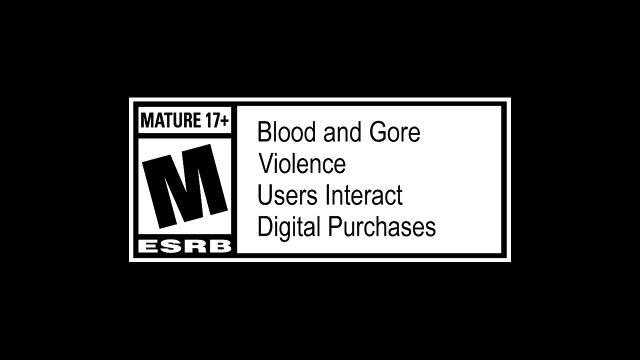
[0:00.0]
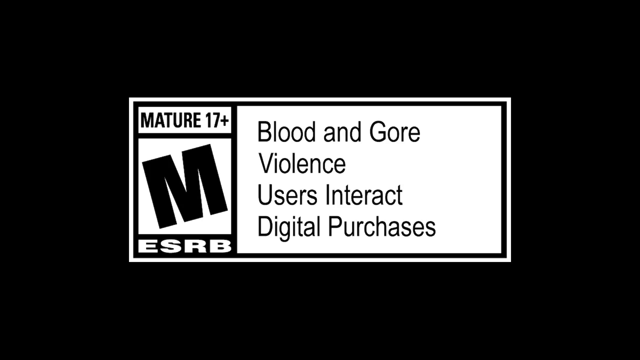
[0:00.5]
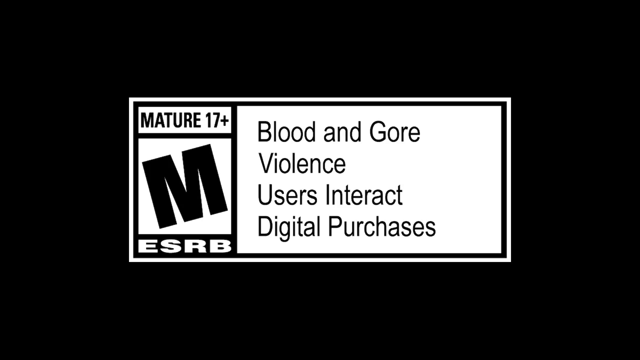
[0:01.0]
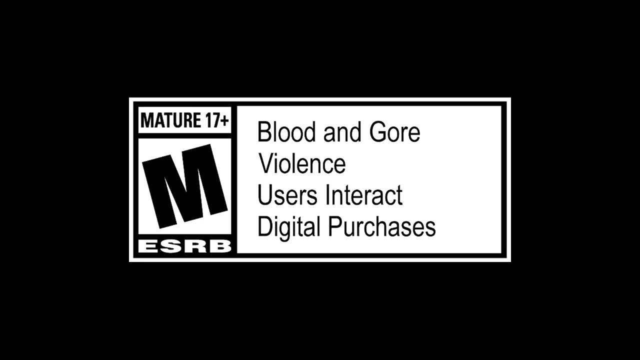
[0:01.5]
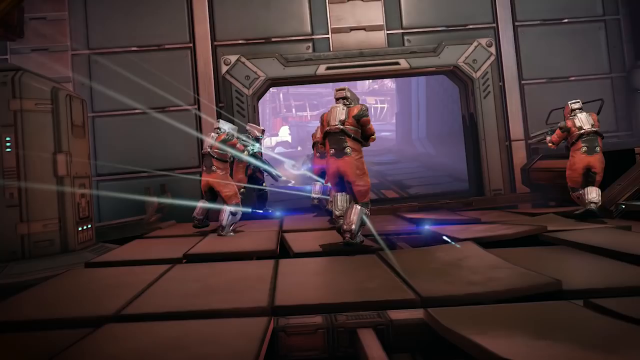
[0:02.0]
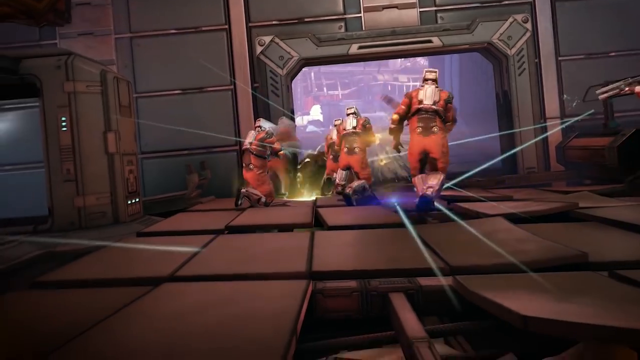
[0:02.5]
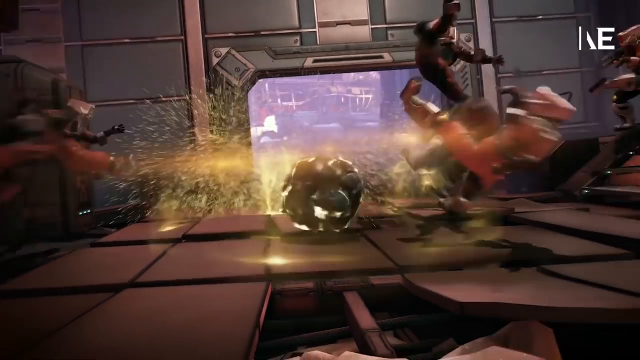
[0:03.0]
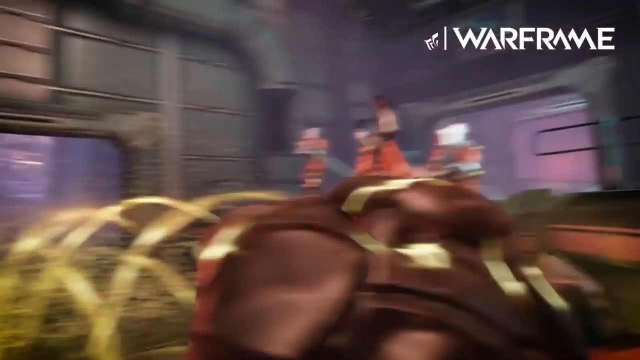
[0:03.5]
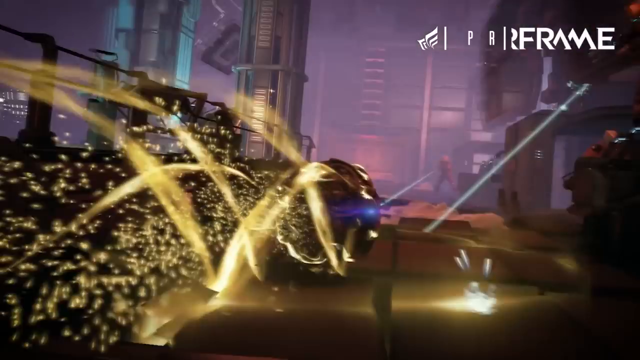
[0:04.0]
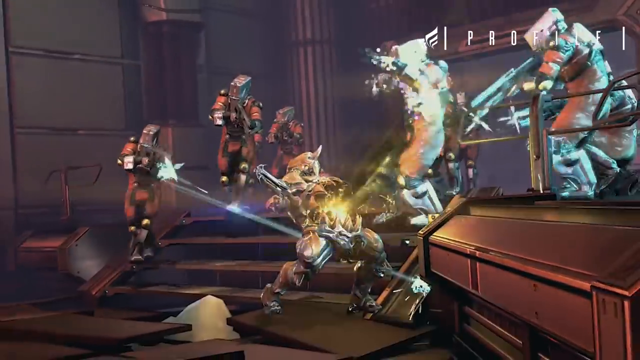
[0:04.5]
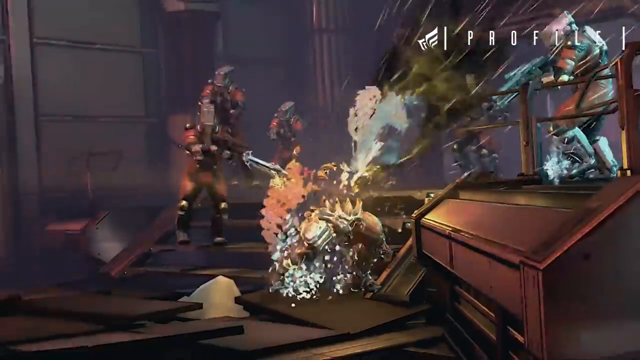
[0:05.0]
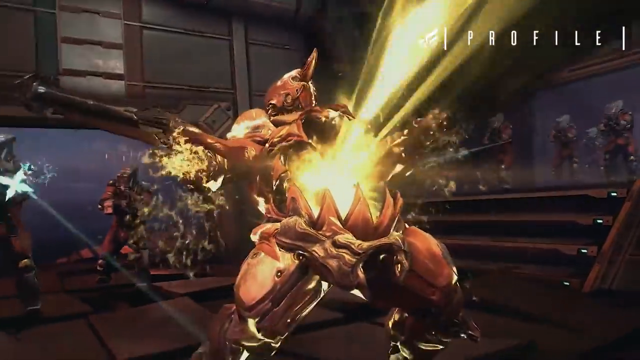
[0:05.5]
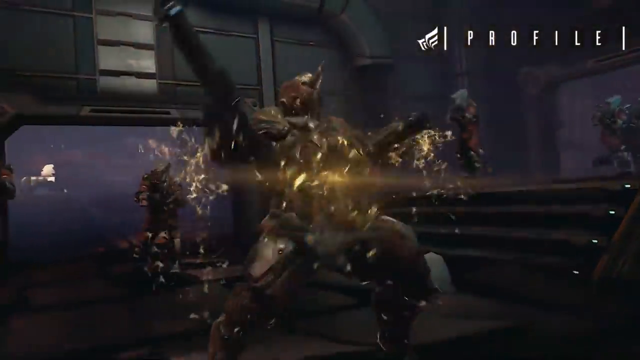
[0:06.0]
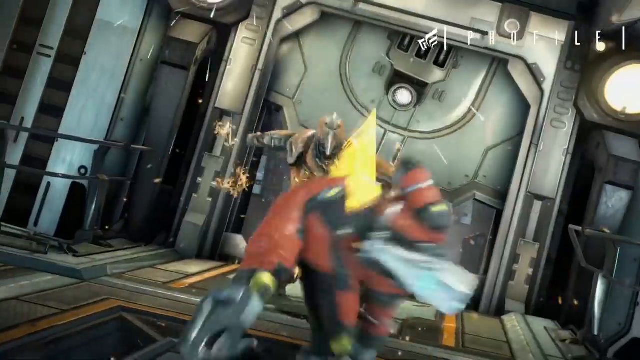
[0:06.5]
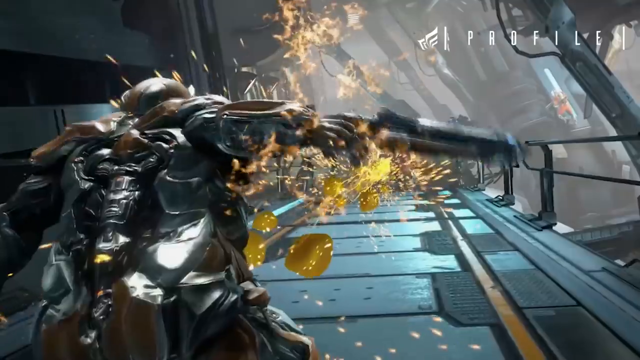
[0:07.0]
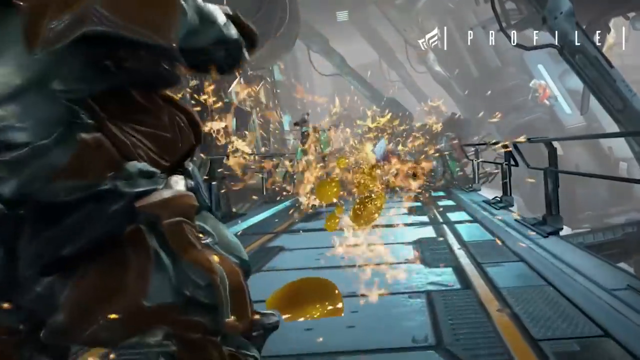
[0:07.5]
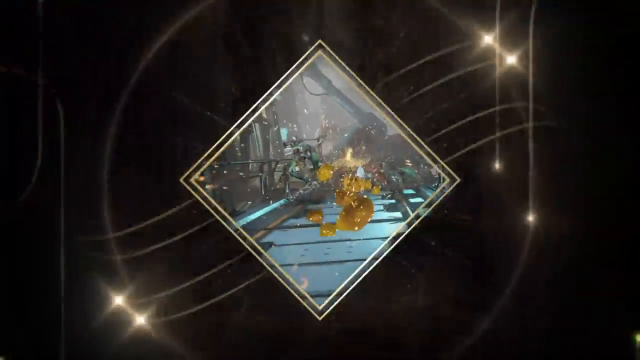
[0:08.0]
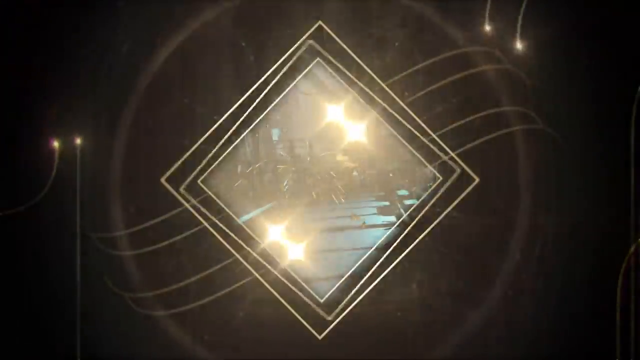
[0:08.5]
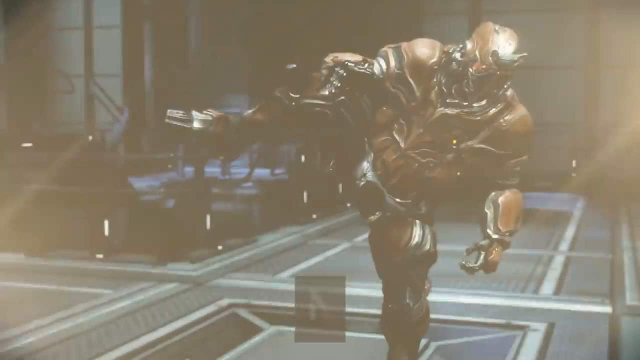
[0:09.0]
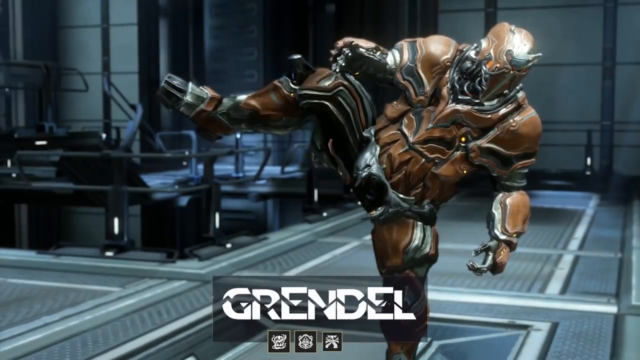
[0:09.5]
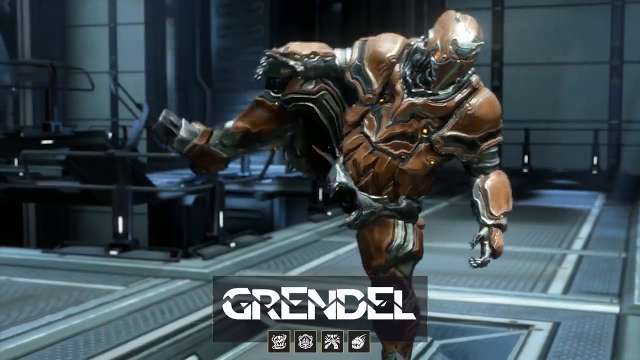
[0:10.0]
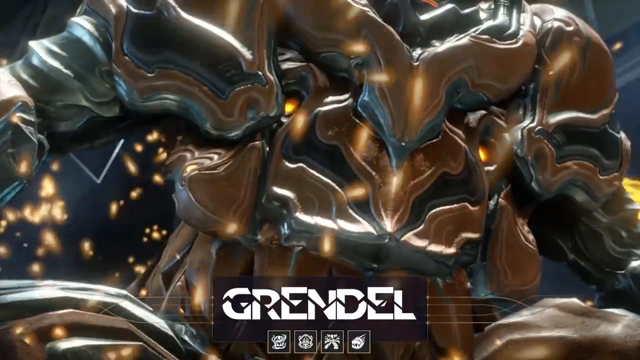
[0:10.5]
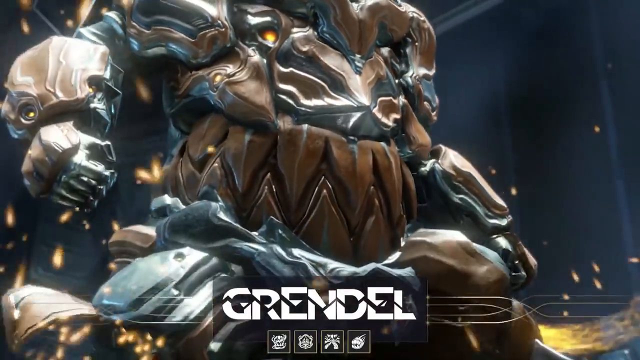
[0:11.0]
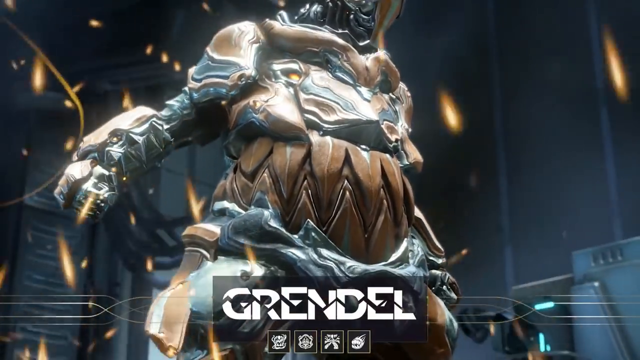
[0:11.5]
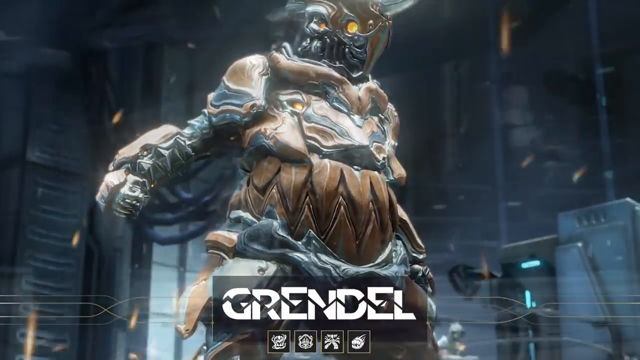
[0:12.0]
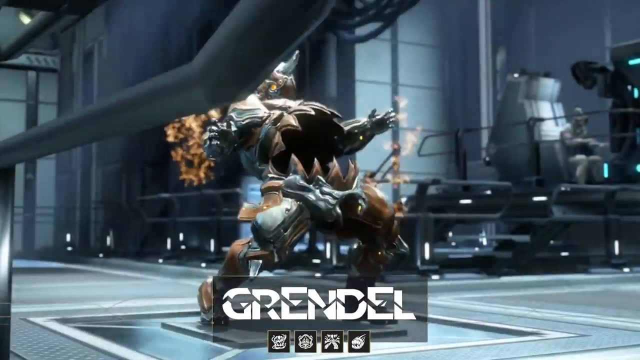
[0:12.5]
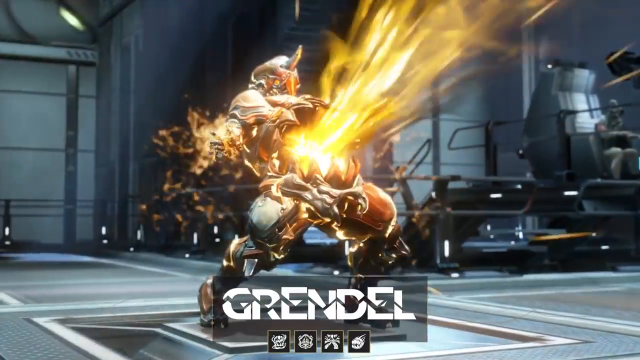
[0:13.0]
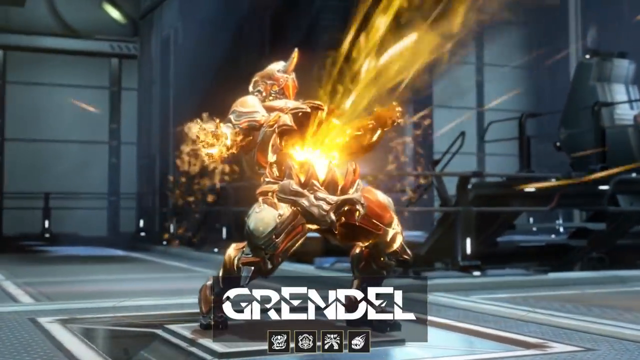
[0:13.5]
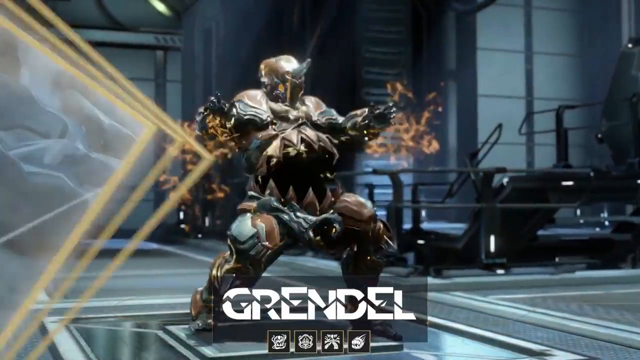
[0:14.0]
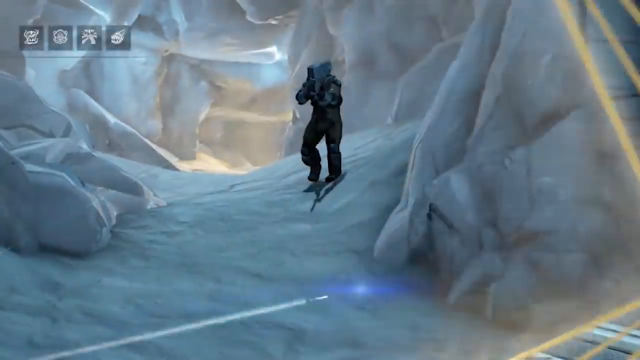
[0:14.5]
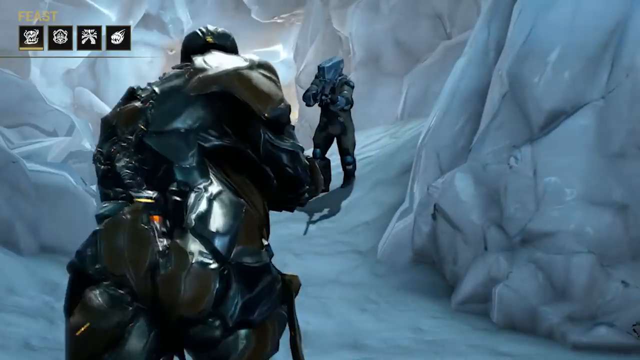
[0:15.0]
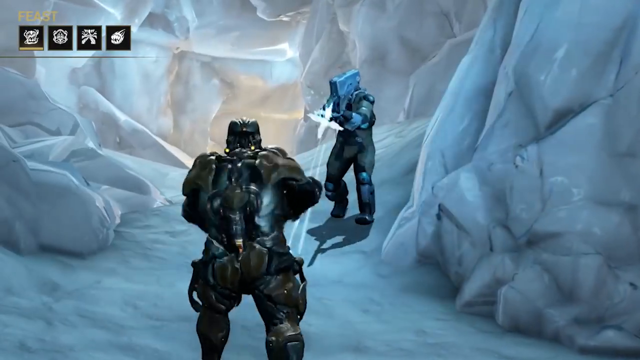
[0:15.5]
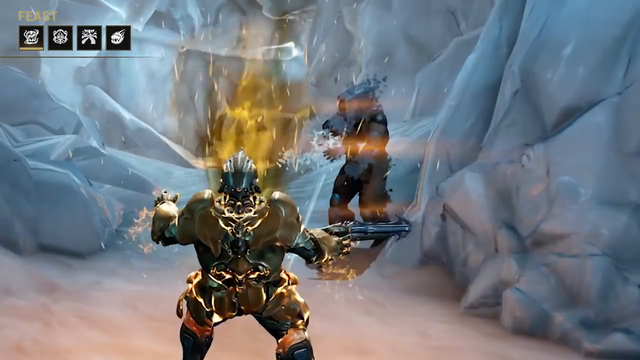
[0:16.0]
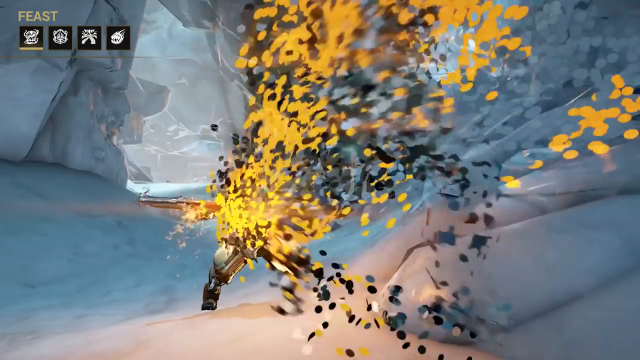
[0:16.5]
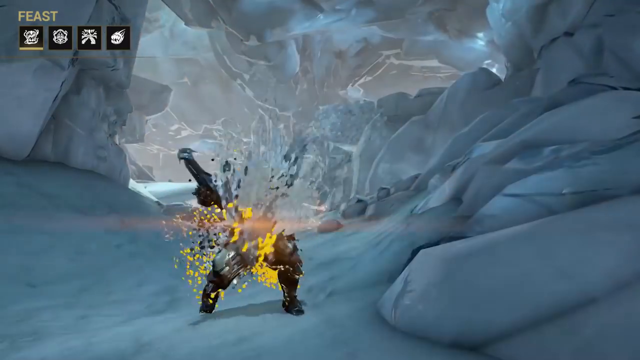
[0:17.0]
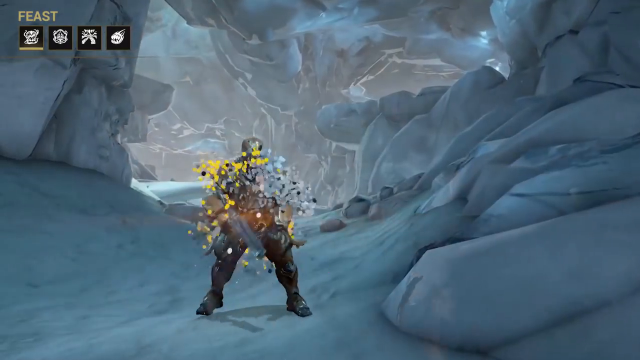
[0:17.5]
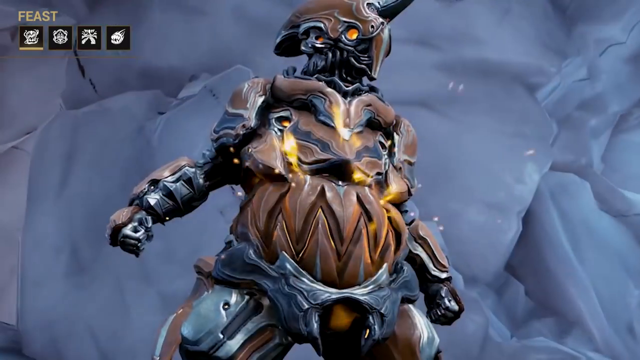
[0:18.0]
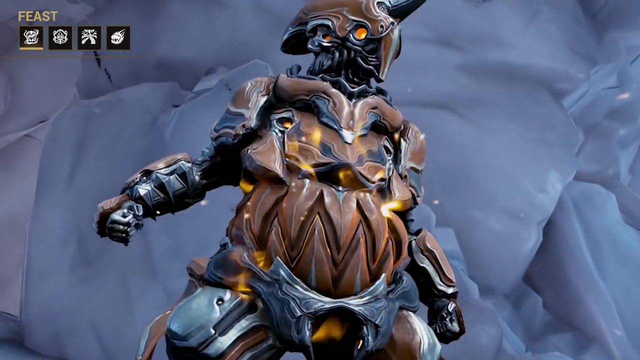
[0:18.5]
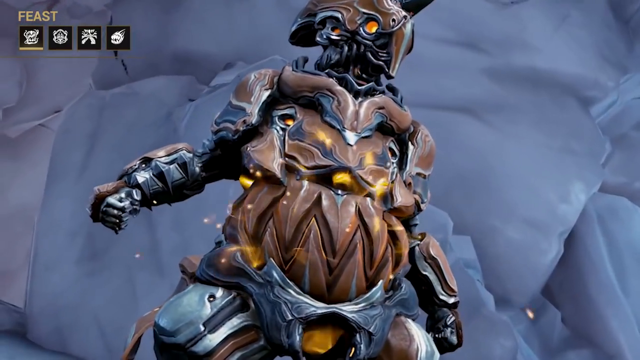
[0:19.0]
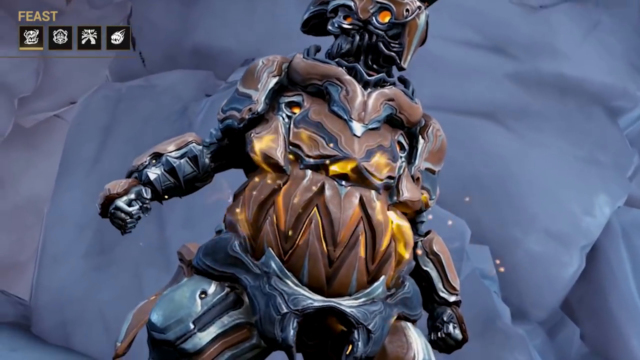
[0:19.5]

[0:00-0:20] The video game video opens on a black background with a white box that reads "mature 17 plus M ESRB blood and gore violence users interact digital purchases." It cuts immediately to people wearing orange shooting at something, and a big fiery ball comes rolling toward the screen out of a square door and goes past. Other guys shoot at figures that are kind of orange-ish, and fire goes into one guy's belly; it looks like he kind of captures the fire. Next comes a blue walkway that turns into a diamond-shaped picture inside a diamond, with what looks like lights shining behind it. The diamond pivots a quarter turn and the lights kind of come together in it. Then a totally new scene appears: a big, kind of gold-colored, robot-like guy with armor on walks kind of slowly, kicks his right leg up and pounds it down.